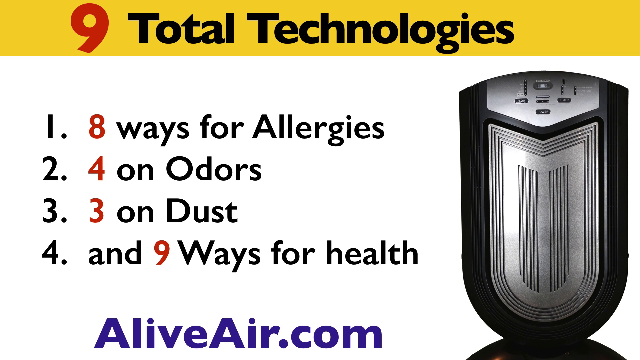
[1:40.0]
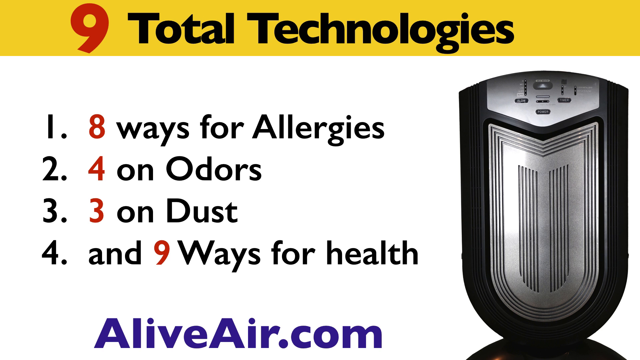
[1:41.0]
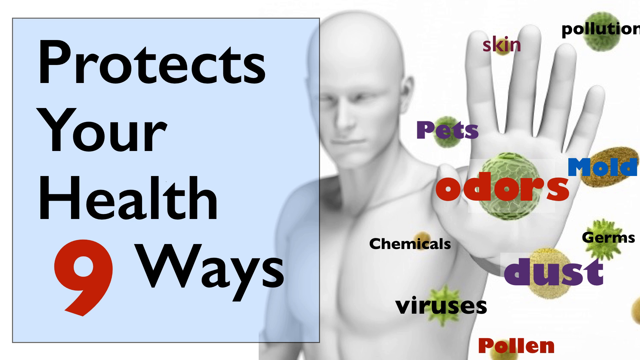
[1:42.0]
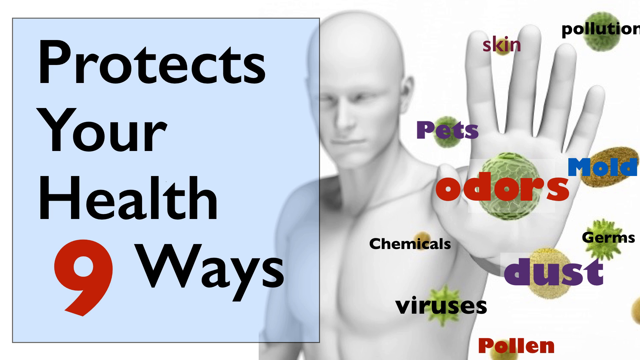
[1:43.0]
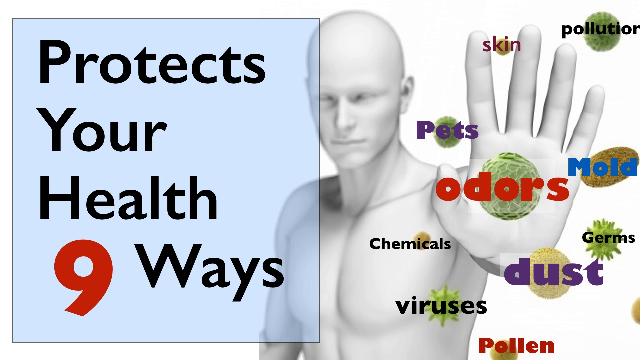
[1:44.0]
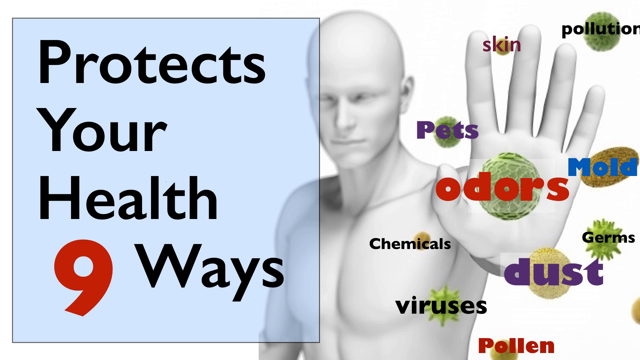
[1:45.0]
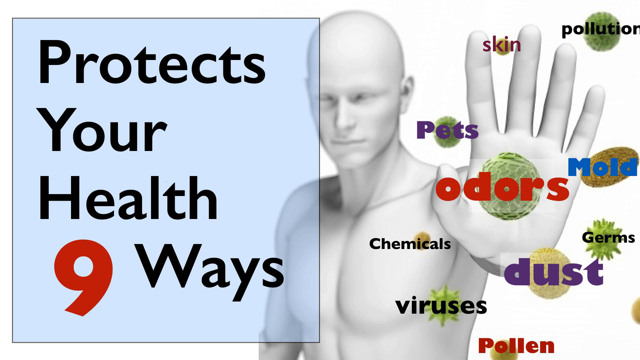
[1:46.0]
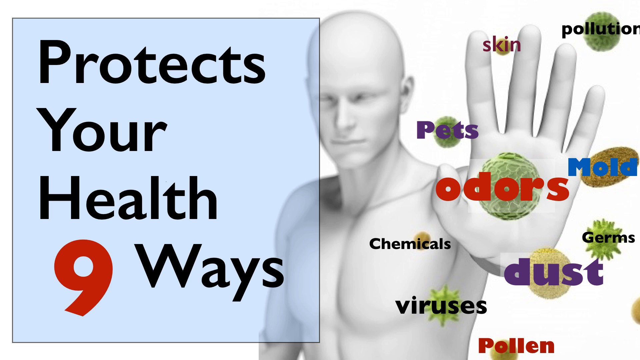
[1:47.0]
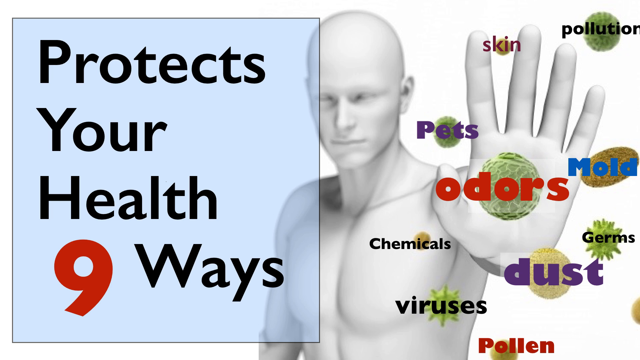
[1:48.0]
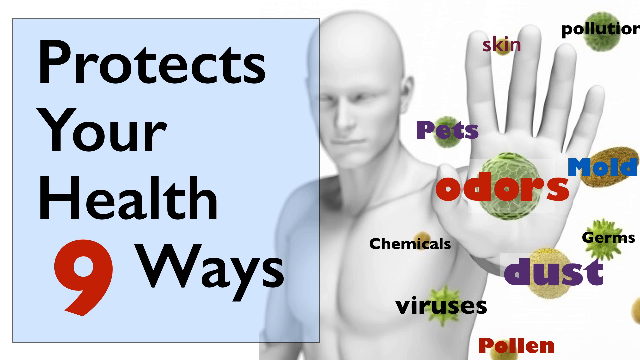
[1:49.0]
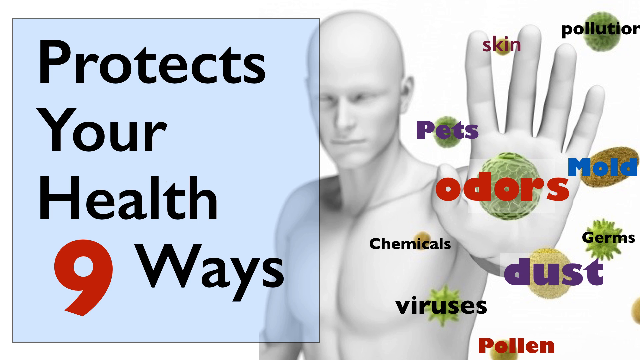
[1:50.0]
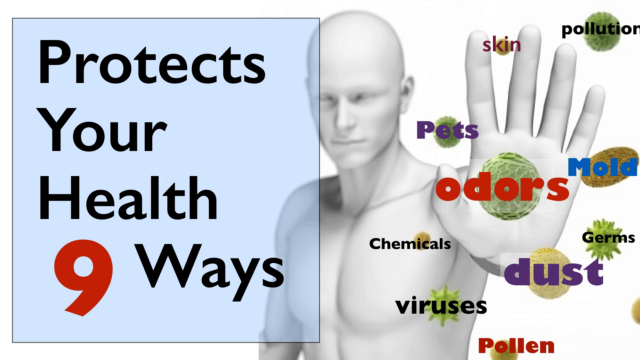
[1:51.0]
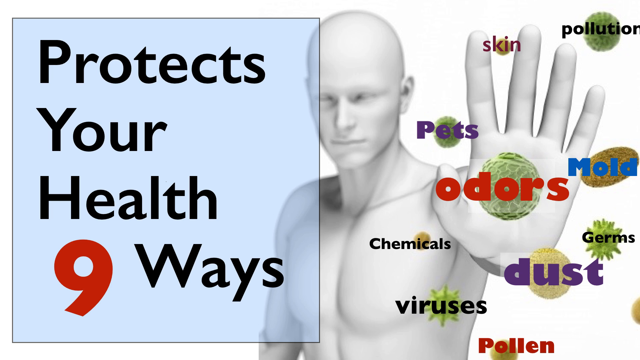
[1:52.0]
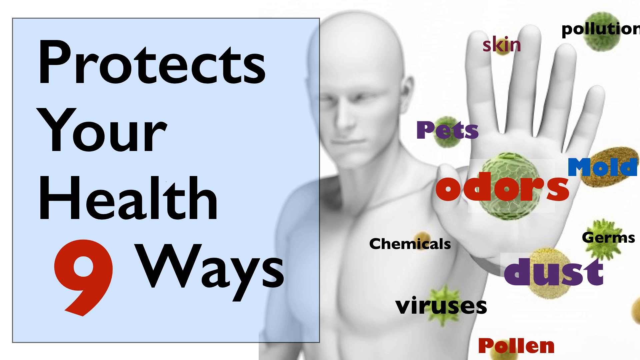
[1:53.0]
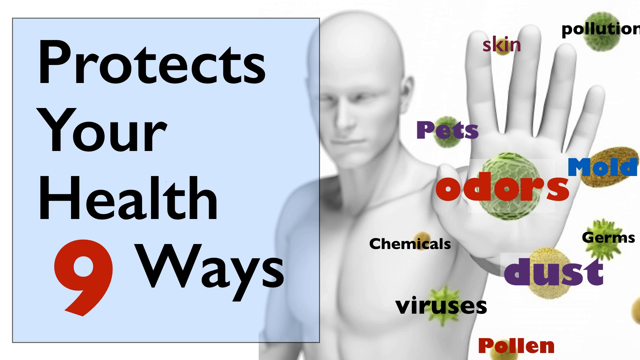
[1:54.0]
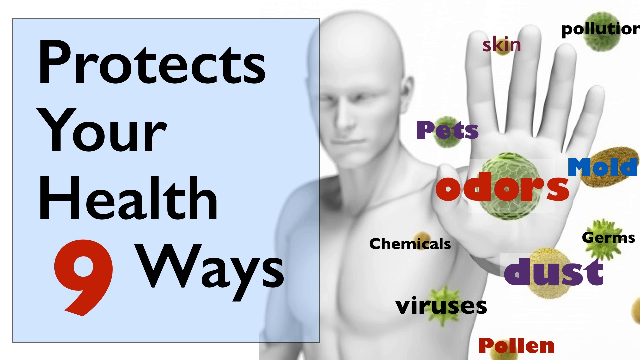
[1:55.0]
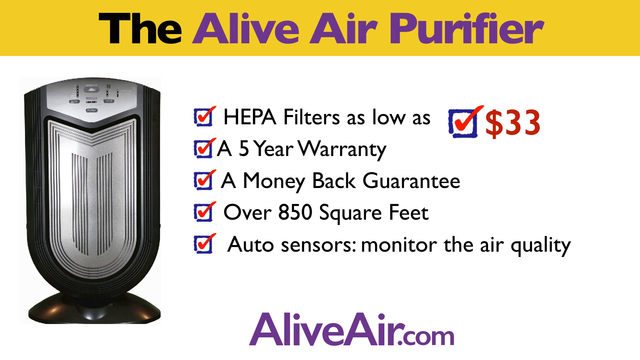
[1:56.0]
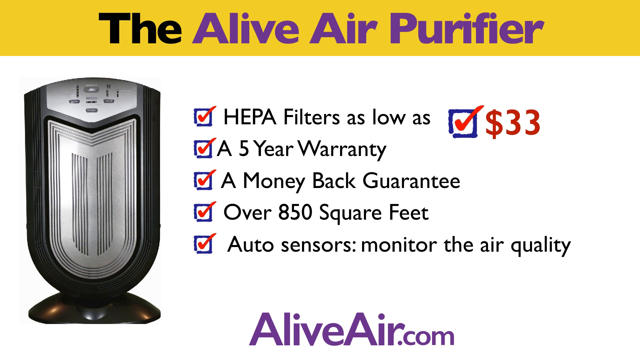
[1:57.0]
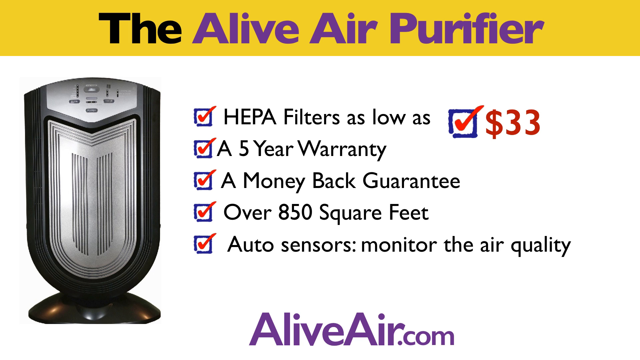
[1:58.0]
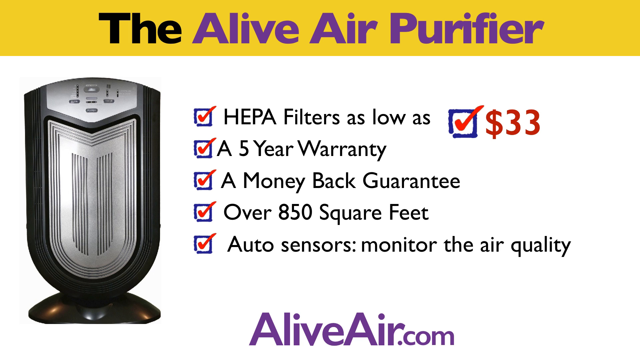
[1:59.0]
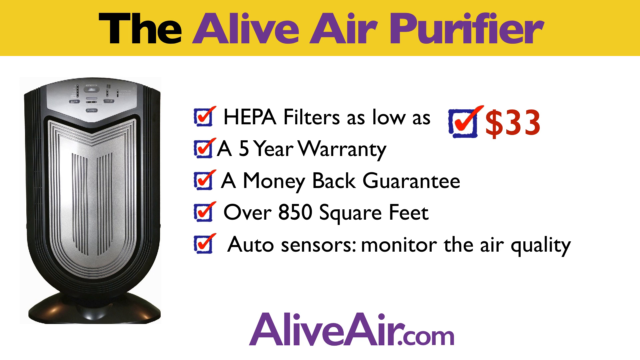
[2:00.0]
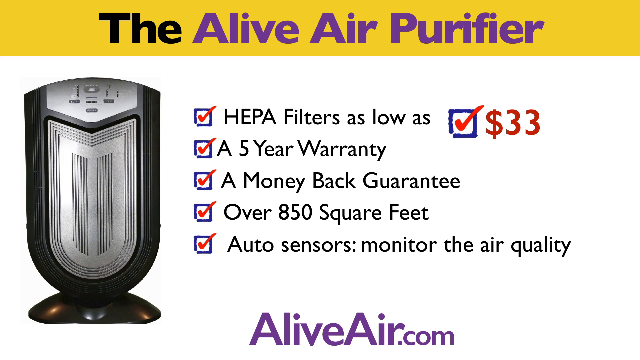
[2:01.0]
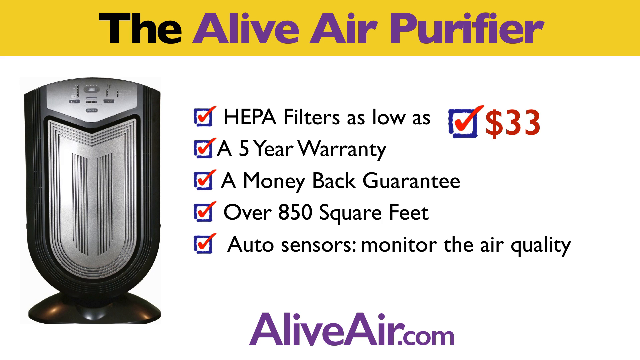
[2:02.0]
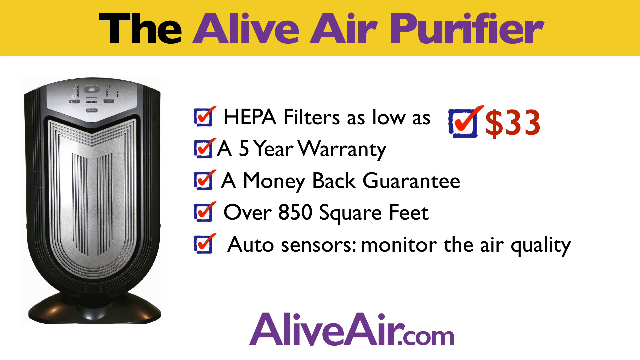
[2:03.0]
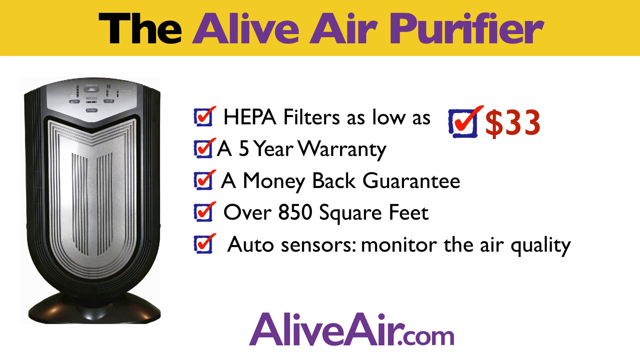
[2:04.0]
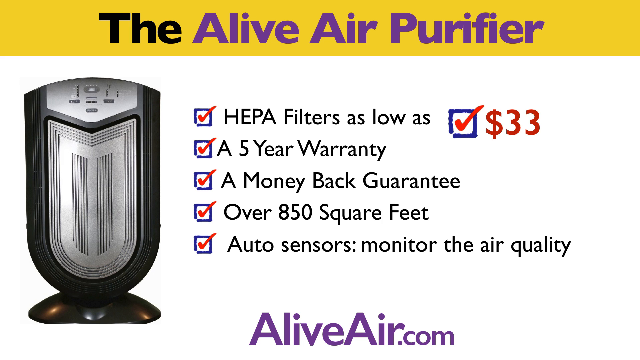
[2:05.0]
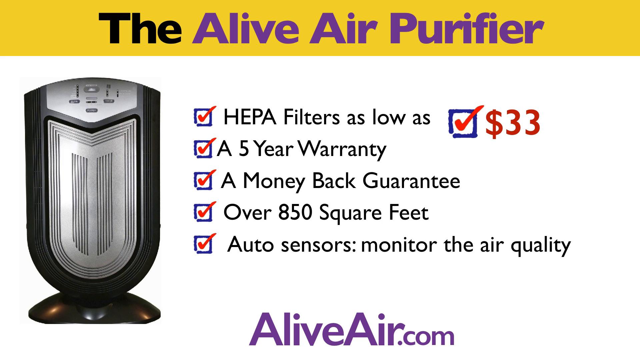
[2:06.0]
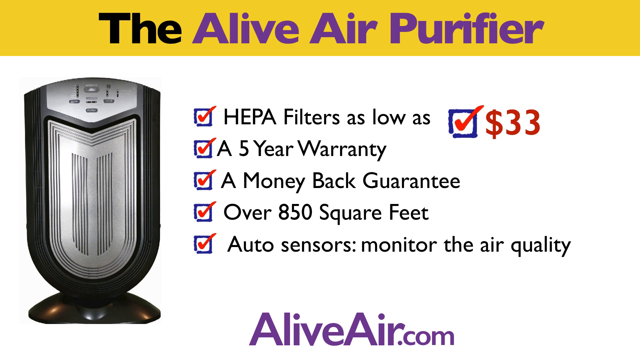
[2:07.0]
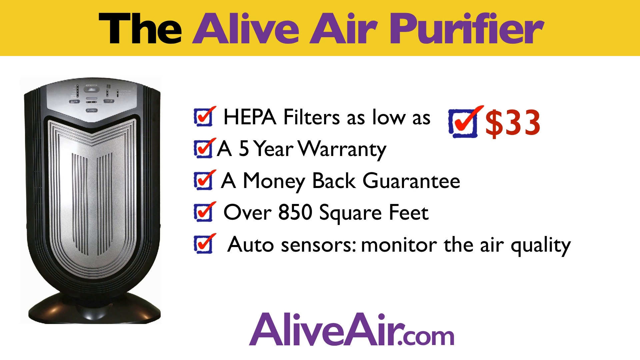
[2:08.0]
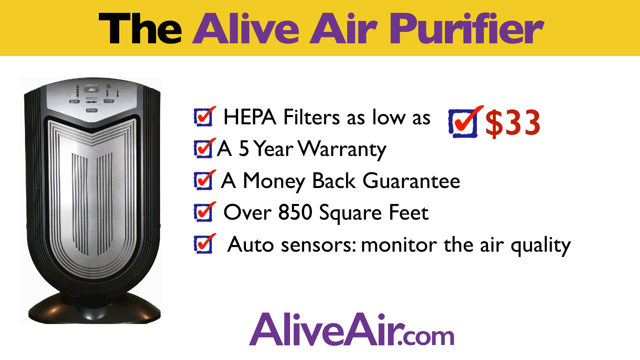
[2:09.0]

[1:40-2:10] The slide shows "nine total technologies" with the list "1 8 ways for allergies, 2 4 on odors, 3 3 on dust, 4 9 ways for health". A slide of a different design follows: a white slide with, in the background, an image of a bald human male with entirely white skin, holding up his left hand with the palm facing the viewer. In front of his palm are magnified images of various allergens: skin, pollution, mold, pets, odors, germs, dust, viruses and chemicals, each a different size and colour. Over the top is a transparent light blue box reading "protects", then "your", then "health", with "nine ways" in bold red. This image stays for about 10 seconds. Then a slide in the earlier design returns, with the yellow bar across the top reading "the Alive Air Purifier" in bold, "the" in black and "Alive Air Purifier" in purple and title case. A picture of an air purifier is on the left of the slide, and to the right are five bullet points, each a blue checkbox with a red checkmark. The first says "HEPA filters as low as", followed by a larger checkbox with a red checkmark and "$33" in a larger font. The second says "a five year warranty", the third "money back guarantee", the fourth "over 850 square feet" and the fifth "auto sensors monitor the air quality". "AliveAir.com" is below in blue at the bottom of the page.